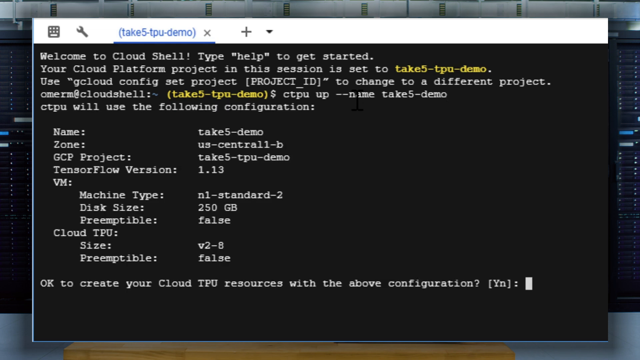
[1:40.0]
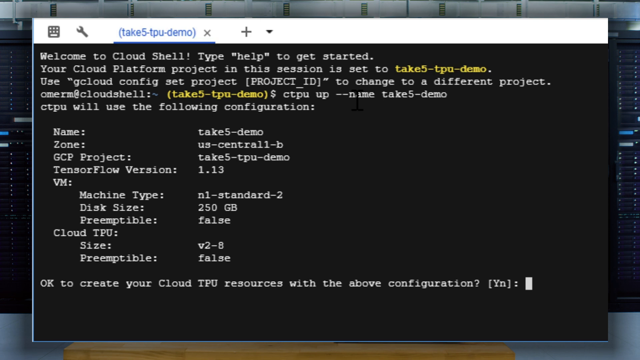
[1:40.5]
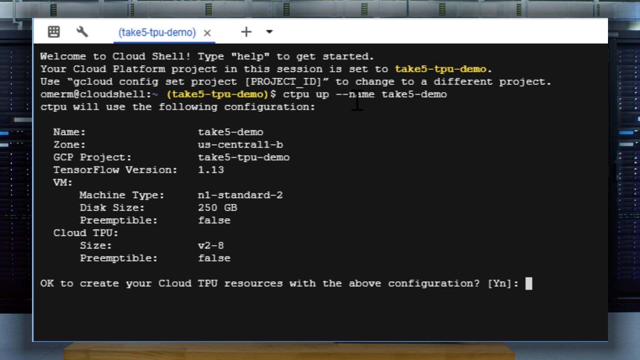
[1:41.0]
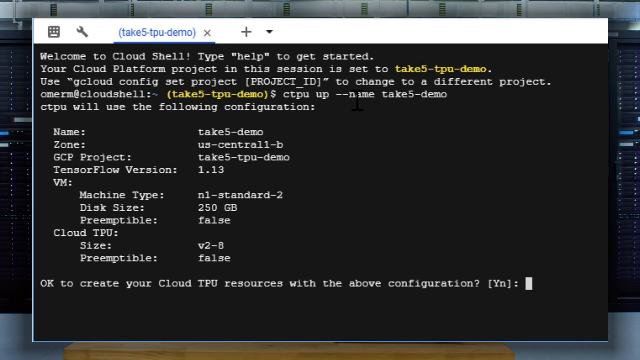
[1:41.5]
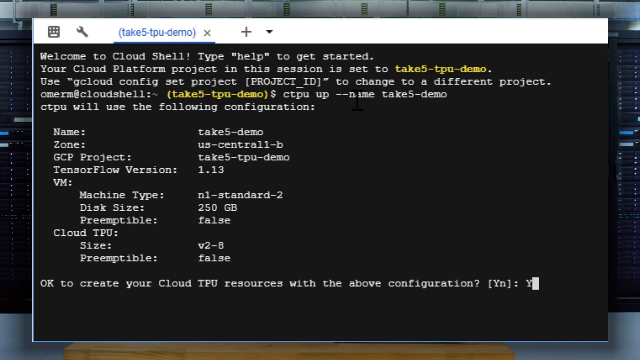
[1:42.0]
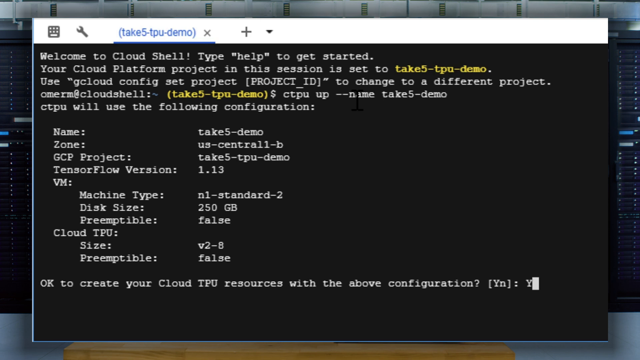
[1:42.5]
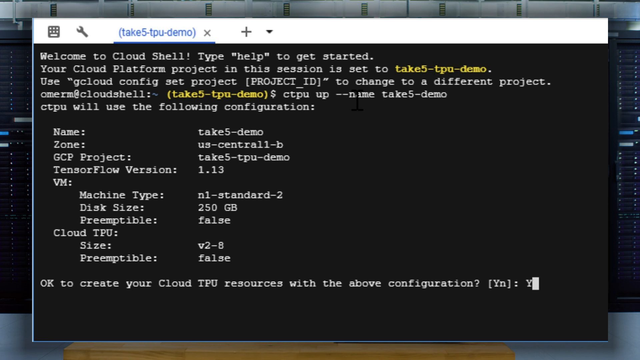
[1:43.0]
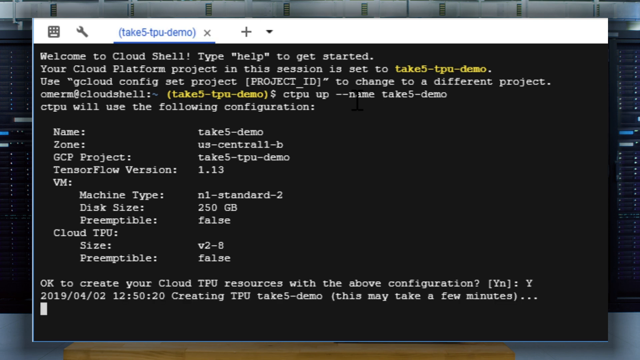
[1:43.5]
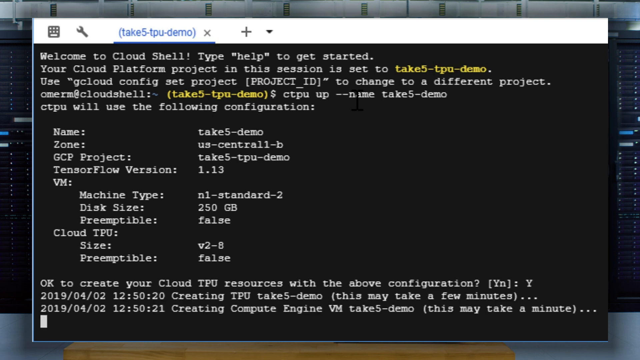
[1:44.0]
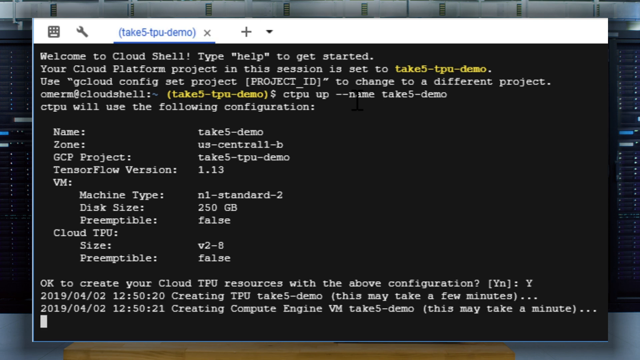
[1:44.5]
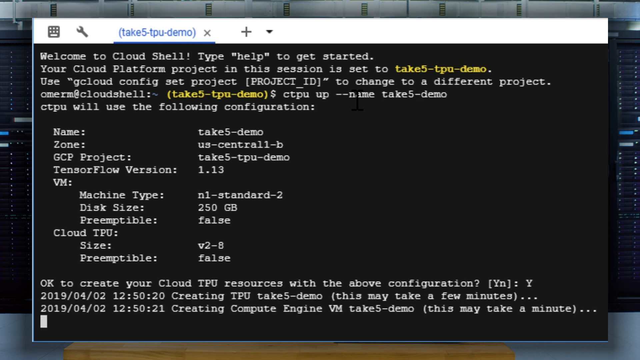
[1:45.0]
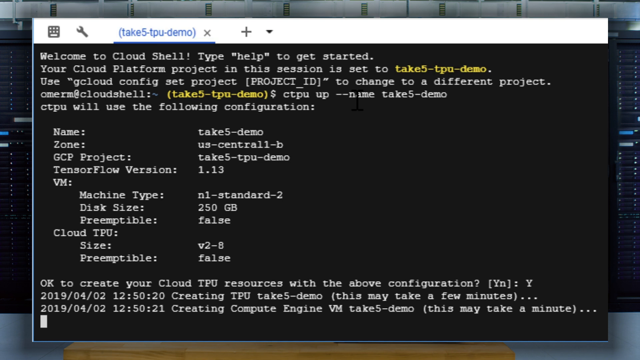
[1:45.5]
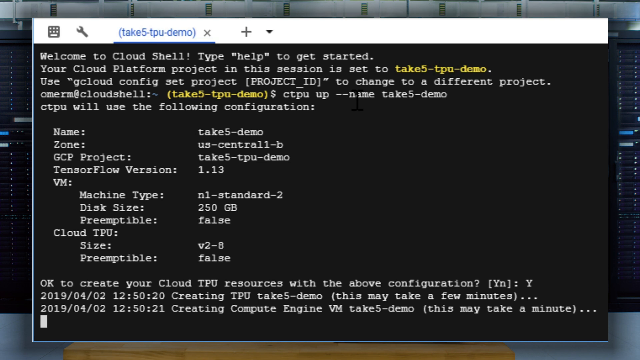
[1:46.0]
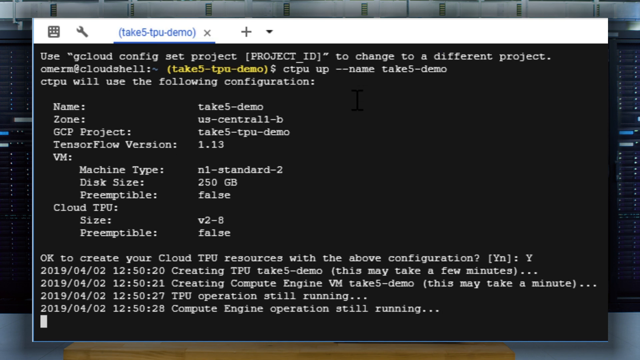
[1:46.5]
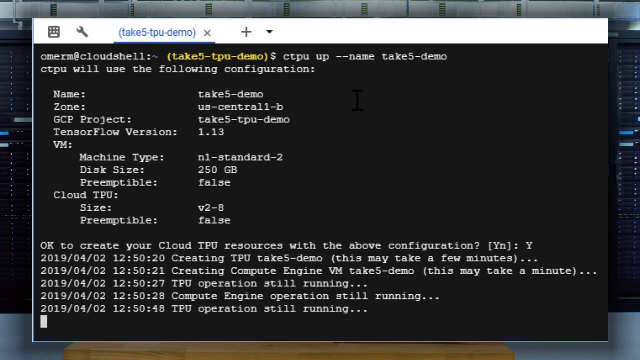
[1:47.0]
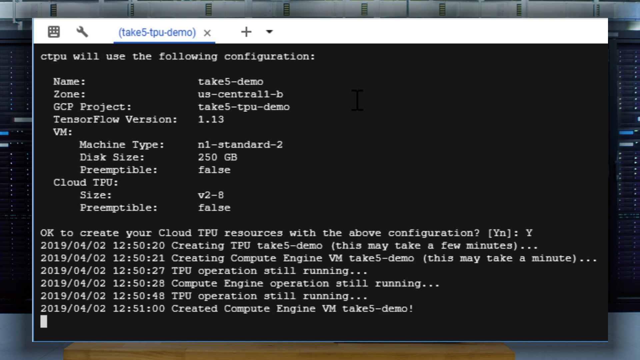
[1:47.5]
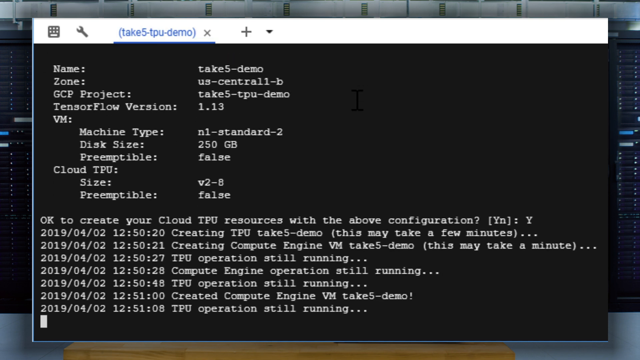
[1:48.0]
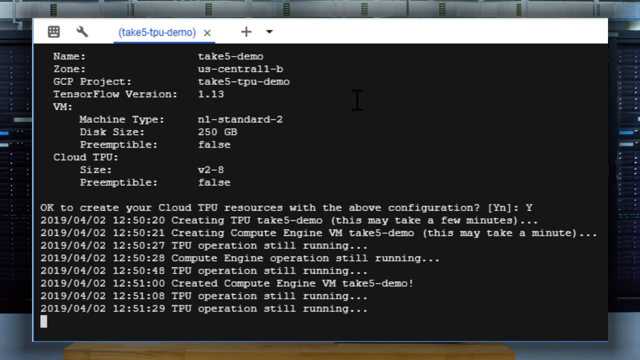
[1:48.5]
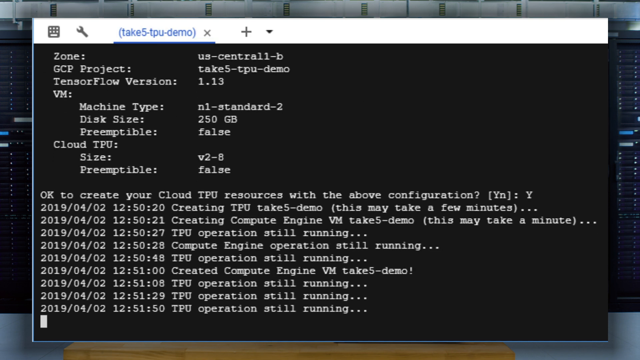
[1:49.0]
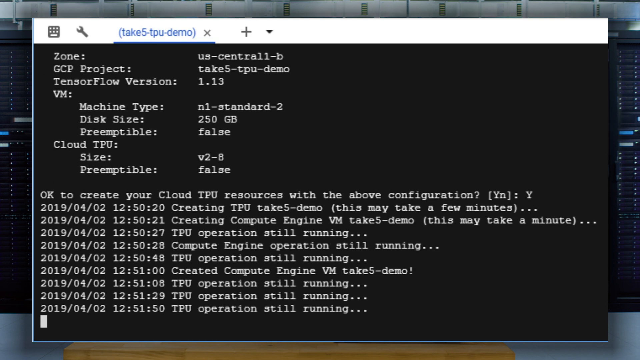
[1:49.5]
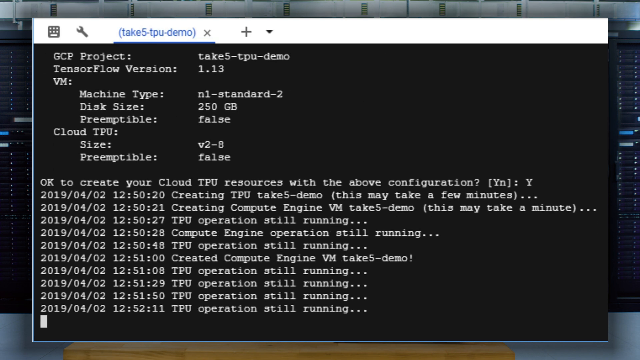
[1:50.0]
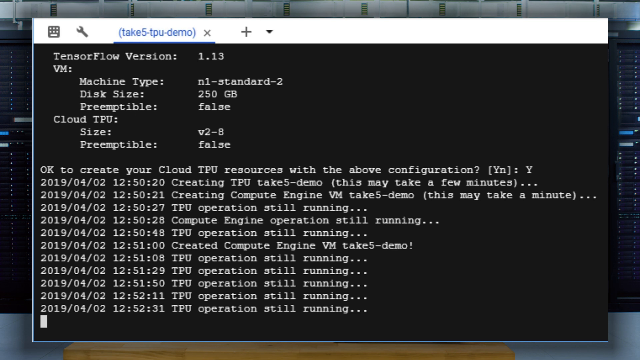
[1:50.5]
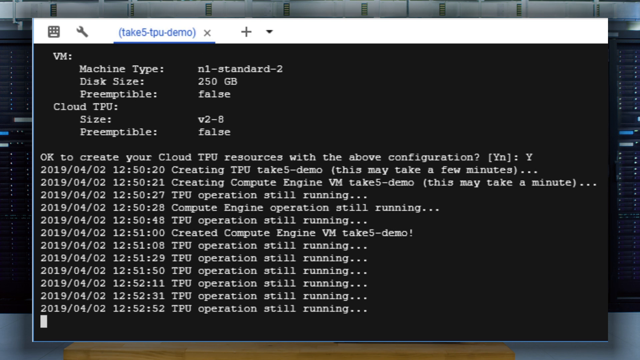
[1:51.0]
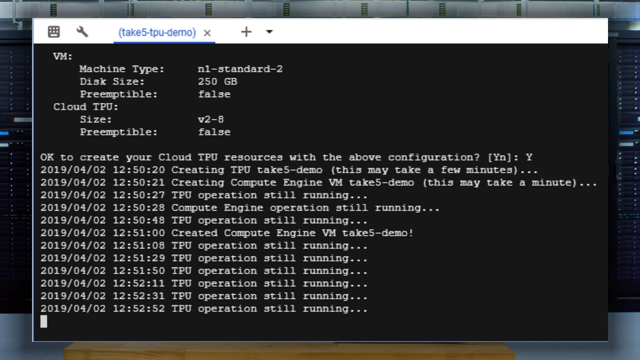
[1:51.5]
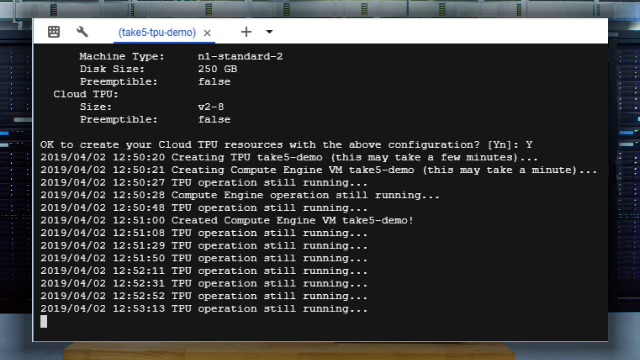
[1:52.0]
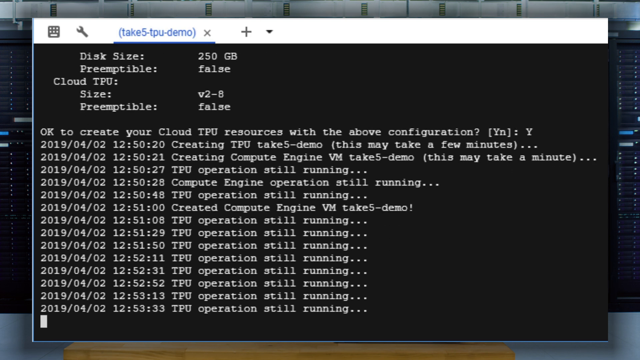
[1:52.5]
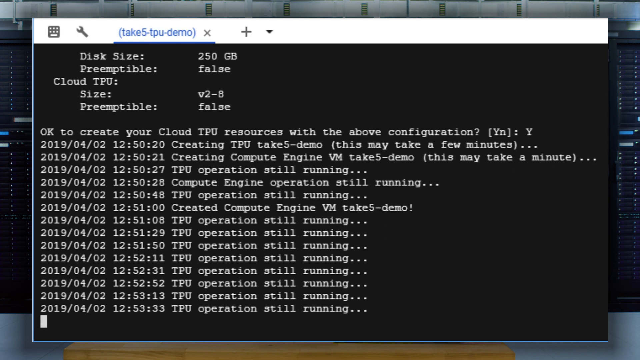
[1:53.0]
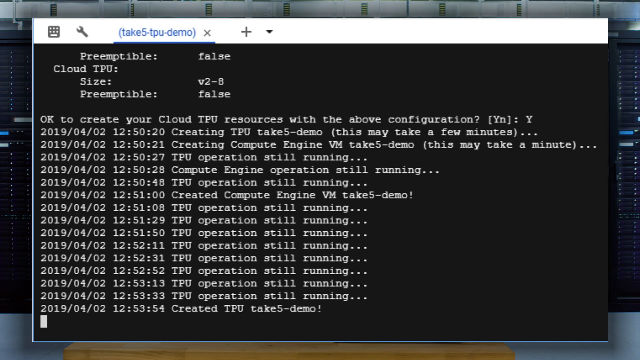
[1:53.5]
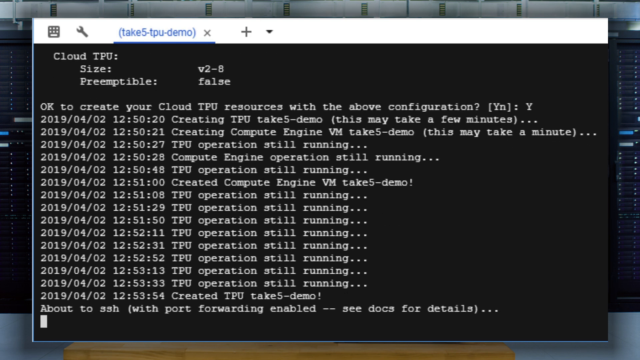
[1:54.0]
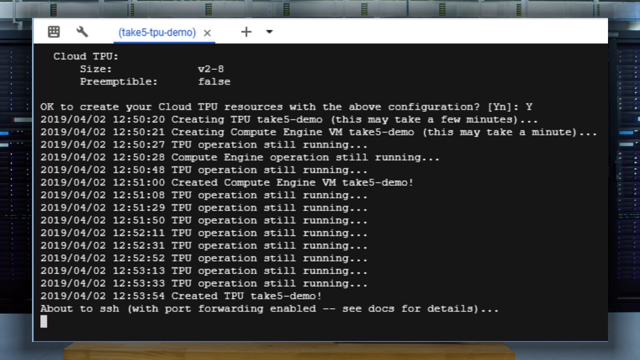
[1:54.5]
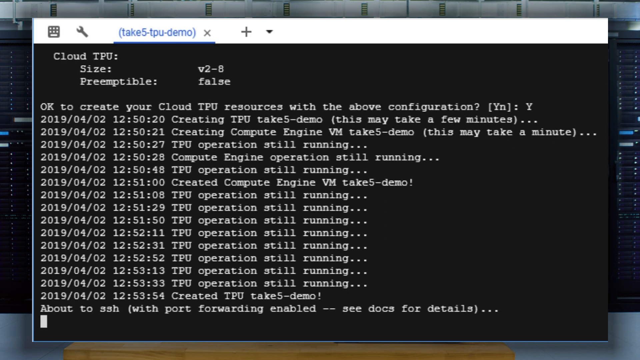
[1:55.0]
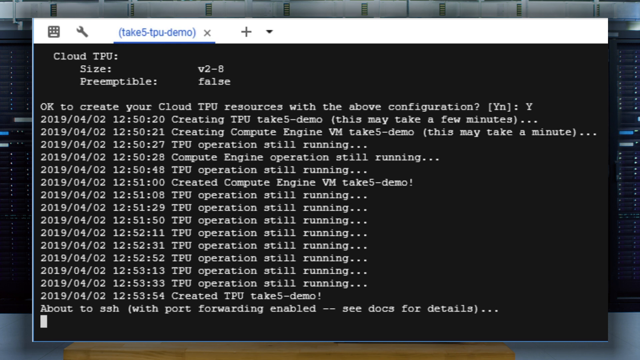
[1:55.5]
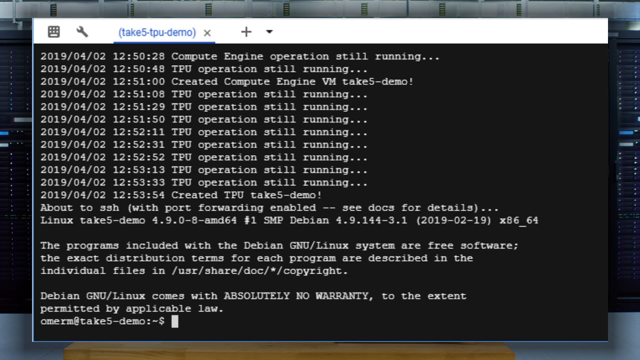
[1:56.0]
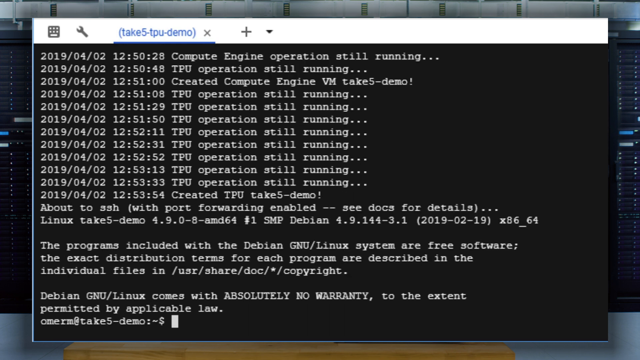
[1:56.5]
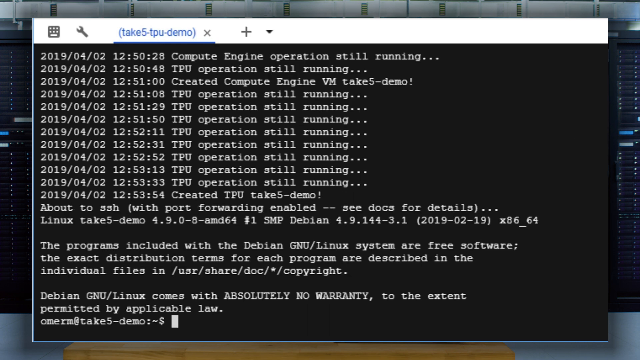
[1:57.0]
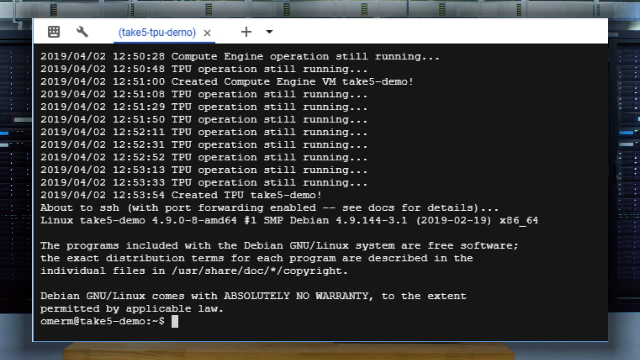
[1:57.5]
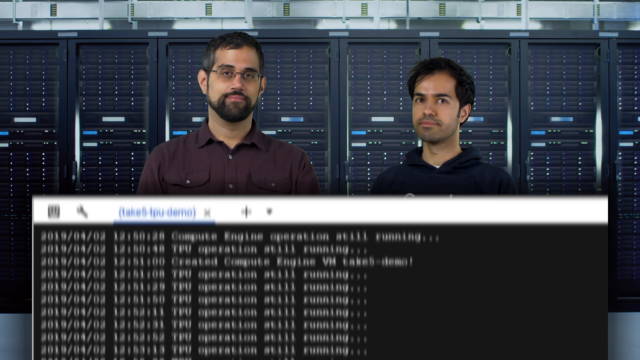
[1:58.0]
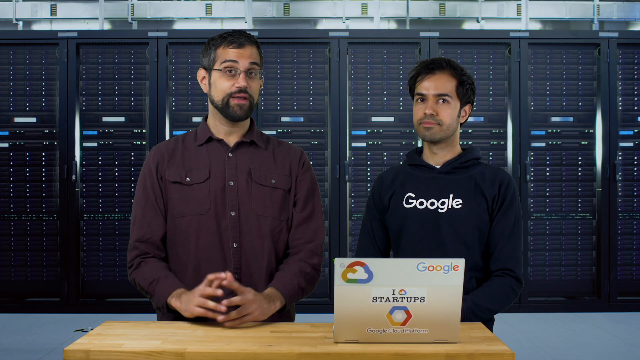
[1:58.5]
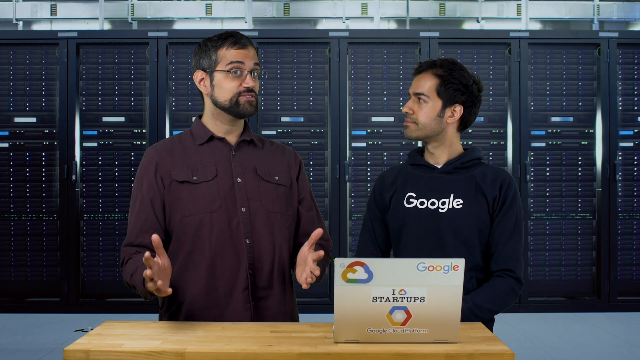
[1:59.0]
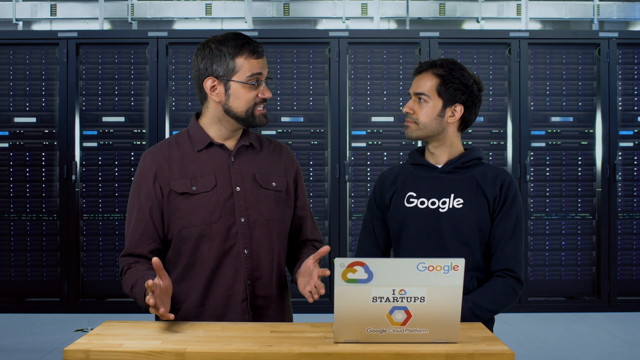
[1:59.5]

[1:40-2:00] Work continues in the workspace where a program is input, running the "Take 5 TPU demo." It says "welcome to CloudShell. Type help to get started," and indicates that the cloud platform project is set to "Take 5 TPU demo." The person's typing produces selections for name, zone, GCP project, TensorFlow version, VM and cloud TPU, with information asking to press Y if it is correct. This brings up additional data that apparently relates to the TPU, since that is written on the side. The view then pans away to the two men giving the presentation, who seem to have a brief talk with each other, before switching back to the data being generated.